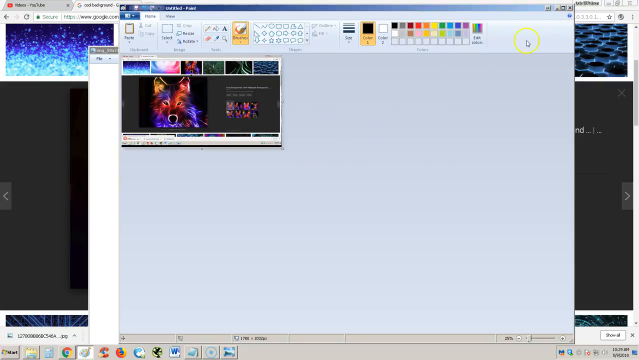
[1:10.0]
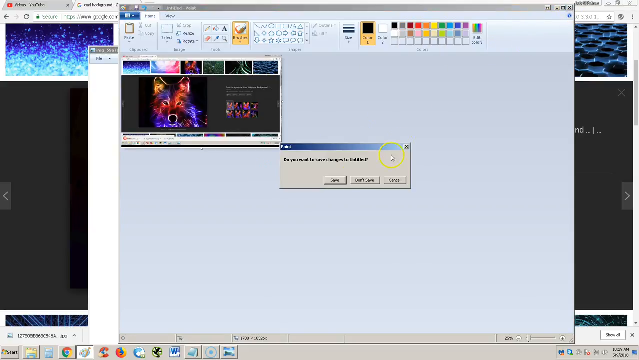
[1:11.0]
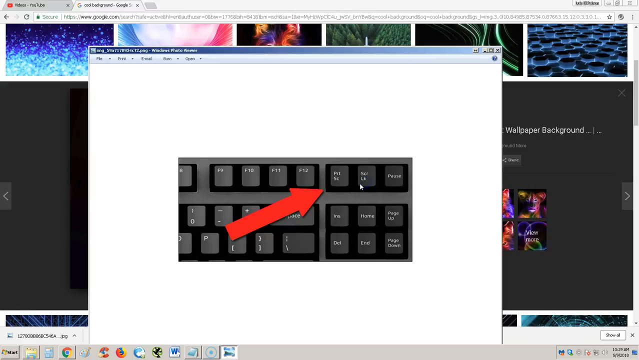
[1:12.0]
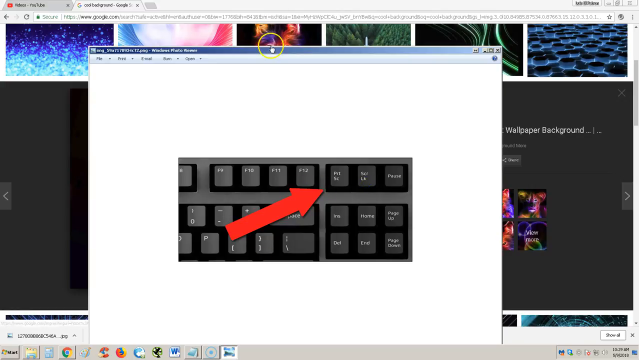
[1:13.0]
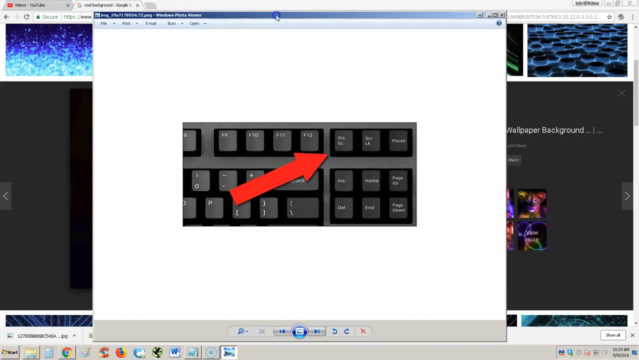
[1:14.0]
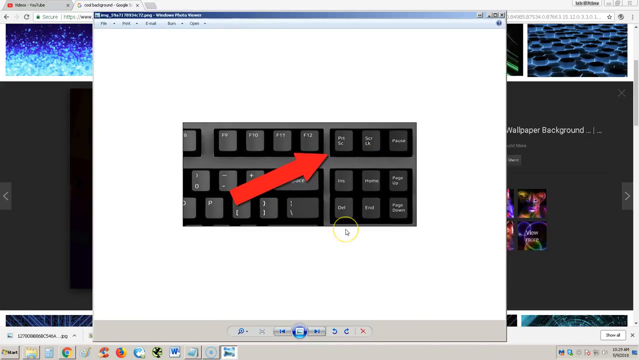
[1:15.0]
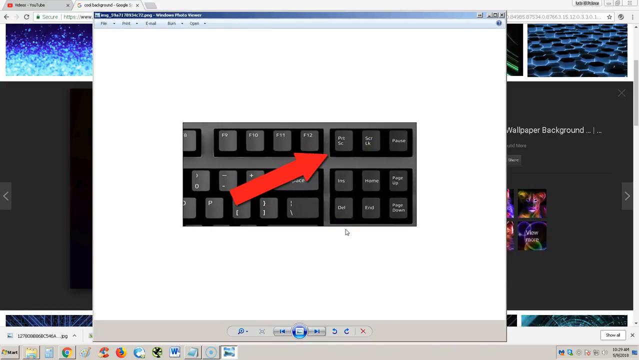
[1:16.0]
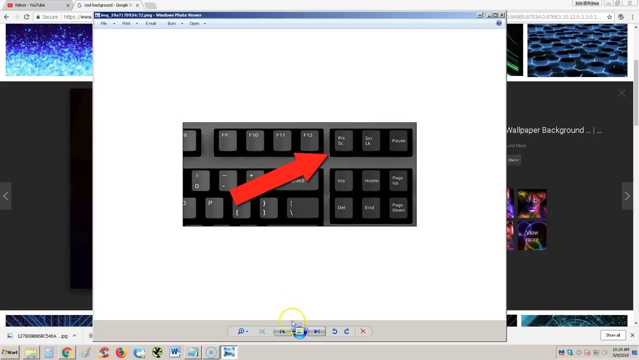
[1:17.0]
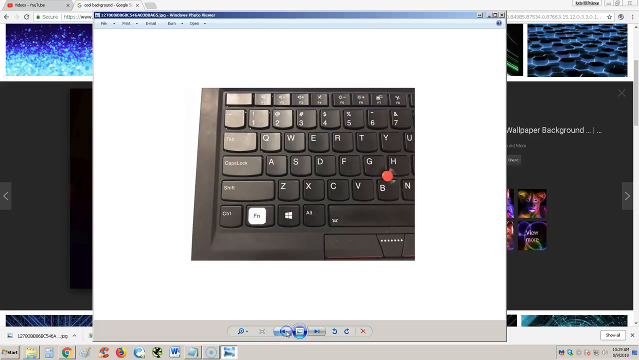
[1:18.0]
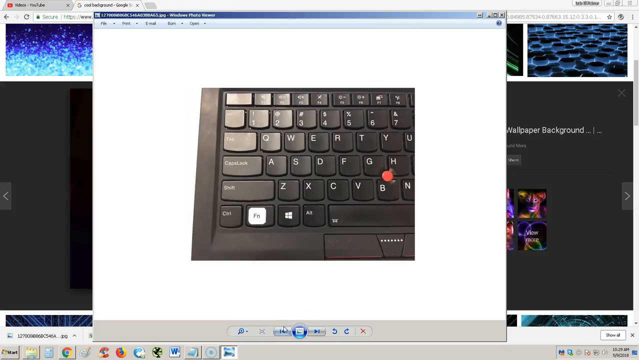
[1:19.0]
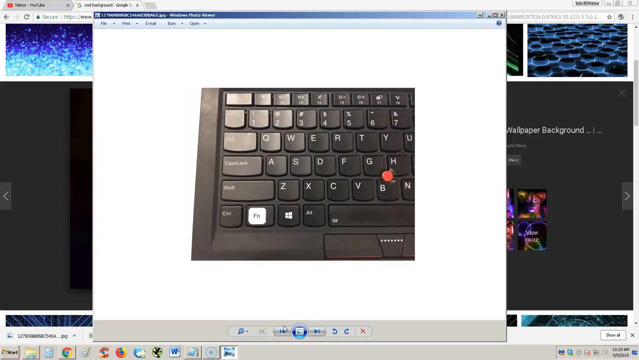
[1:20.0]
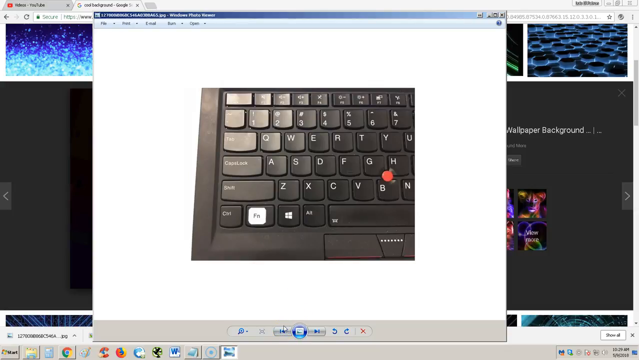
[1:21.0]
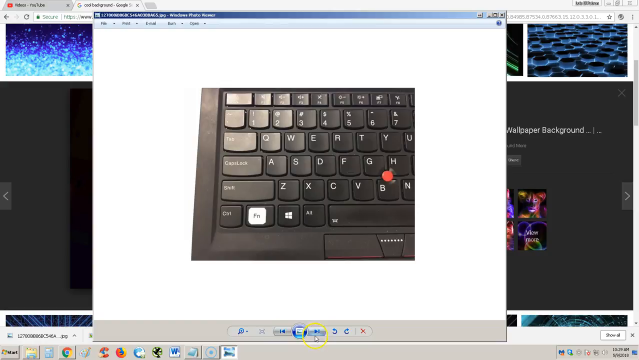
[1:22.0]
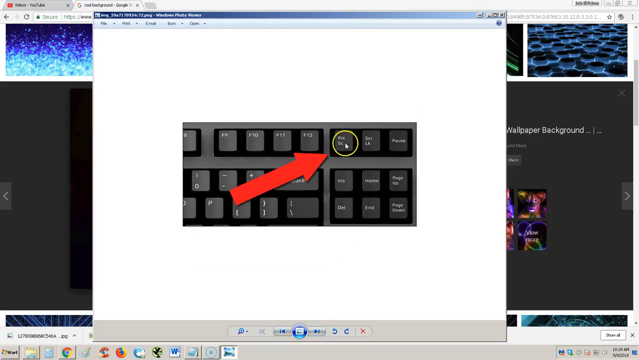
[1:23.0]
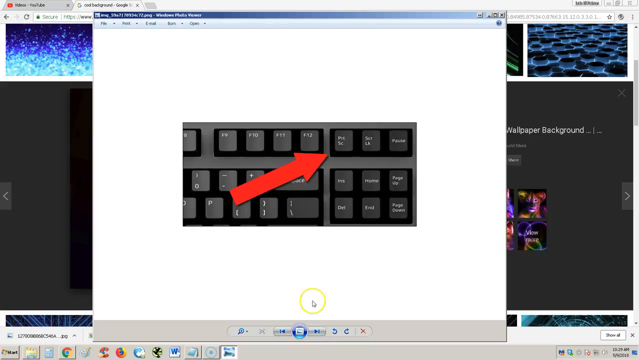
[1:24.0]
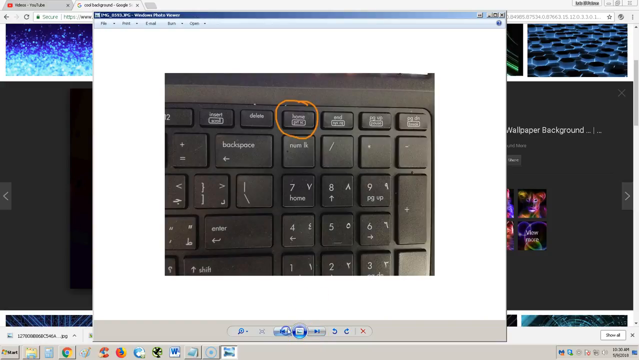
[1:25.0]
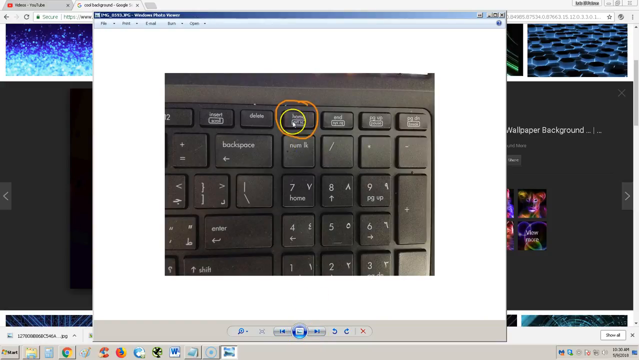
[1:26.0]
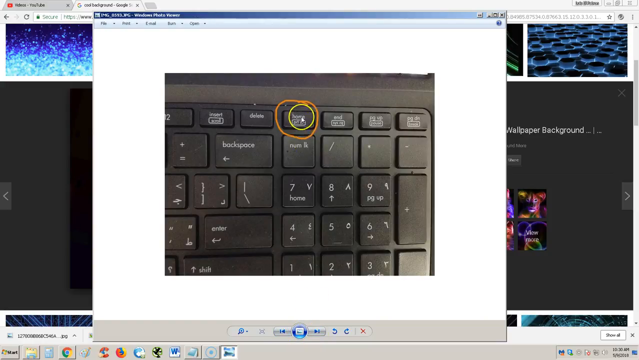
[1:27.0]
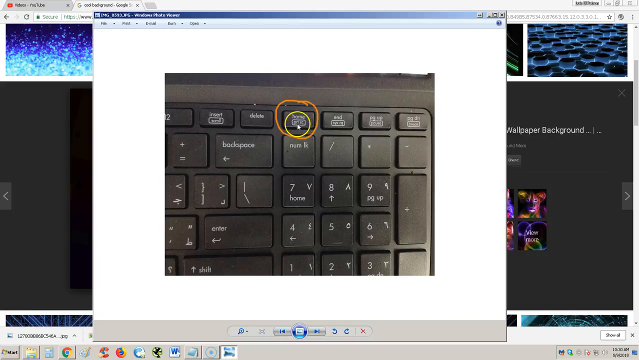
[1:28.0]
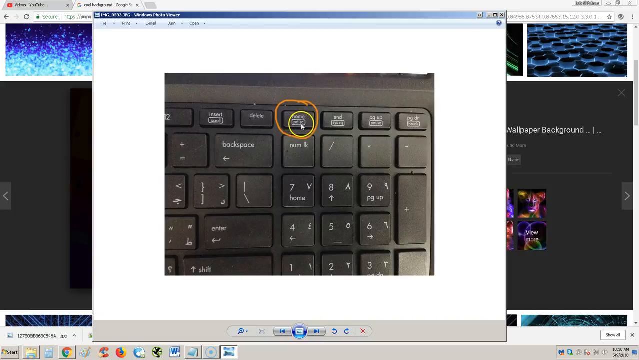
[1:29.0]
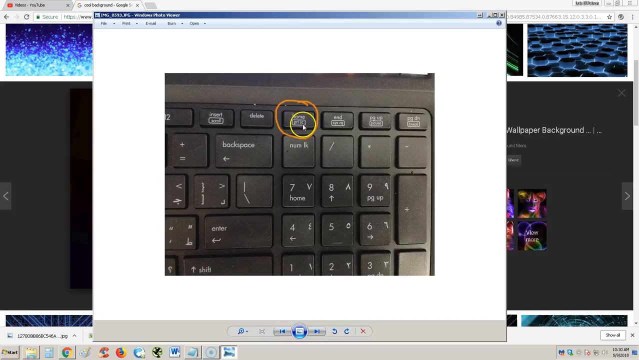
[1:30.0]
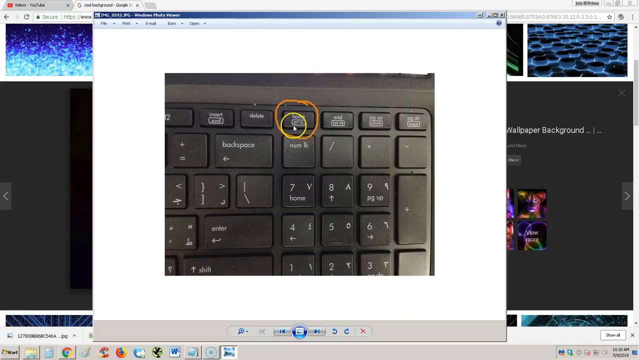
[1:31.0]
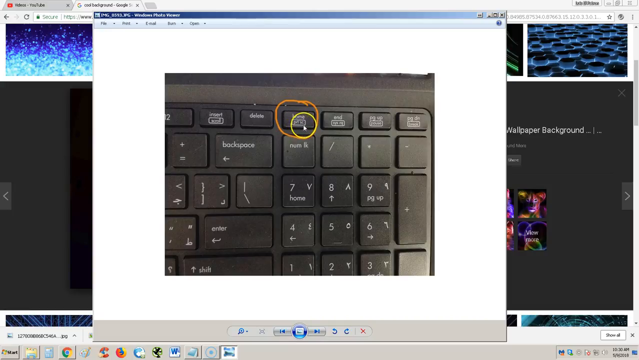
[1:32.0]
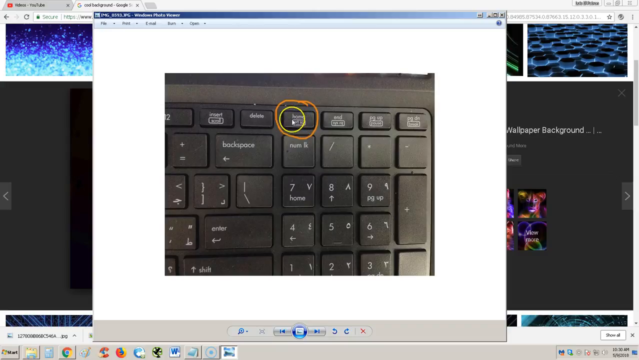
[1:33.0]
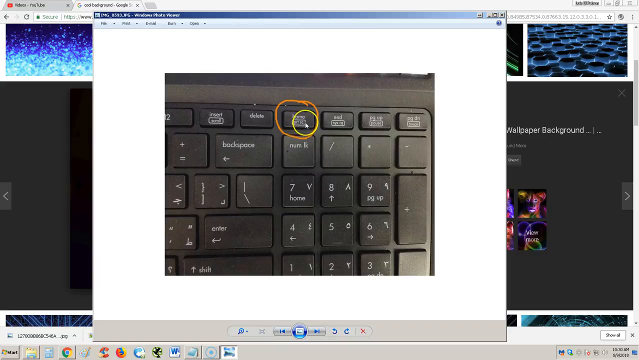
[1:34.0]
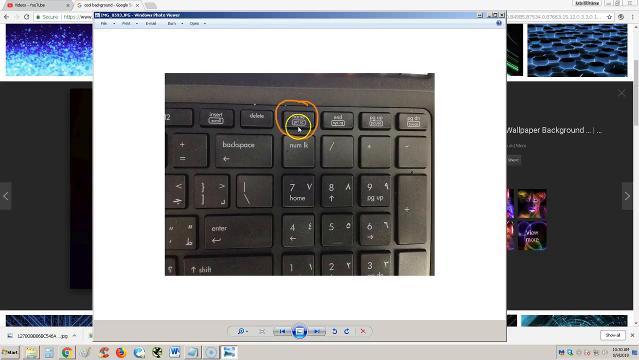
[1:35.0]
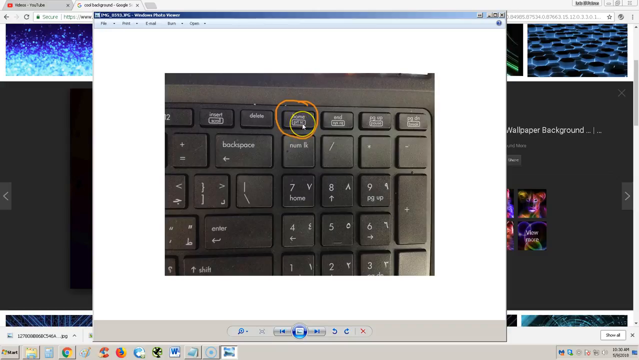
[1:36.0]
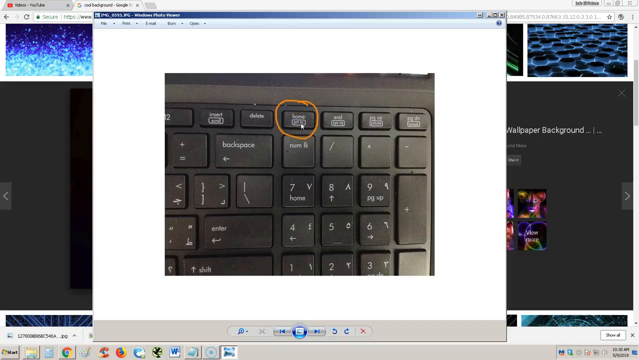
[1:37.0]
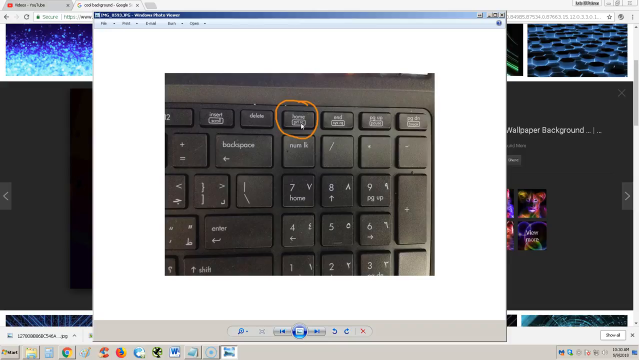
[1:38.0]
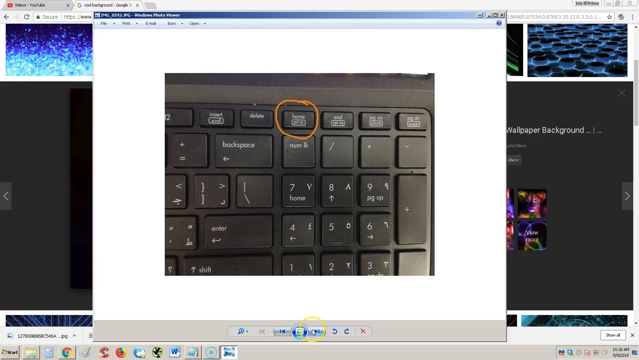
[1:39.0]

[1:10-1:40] She clicks the X, and a window pops up asking whether to save changes to the clipboard; she clicks don't save. The keyboard image returns. The cursor goes around in circles, then scrolls up to the top, grabs the top of the box and stretches it upwards, making it larger. The cursor goes in circles around the keyboard, then at the bottom of the menu clicks the left arrow, changing the image to the left side of a keyboard. The right arrow is clicked, returning to the cropped picture of the print screen button on the keyboard. The cursor circles the print screen button several times, then clicks the left button at the bottom twice. A yellow-orange circle now surrounds a button in the image, and the cursor circles over it, covering it so it is hard to read, hovering slowly around the button in small circles. The cursor then scrolls to the bottom and clicks the left arrow.